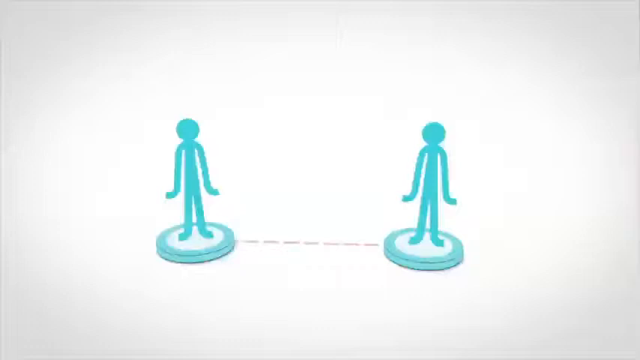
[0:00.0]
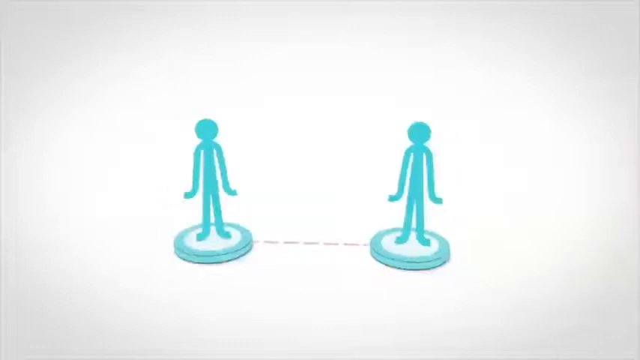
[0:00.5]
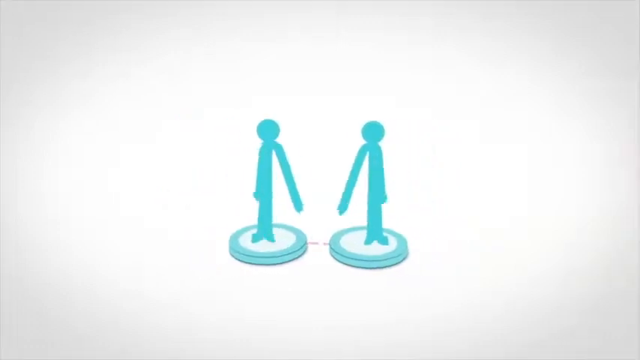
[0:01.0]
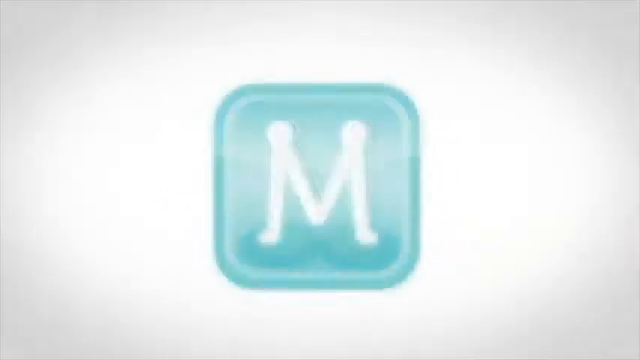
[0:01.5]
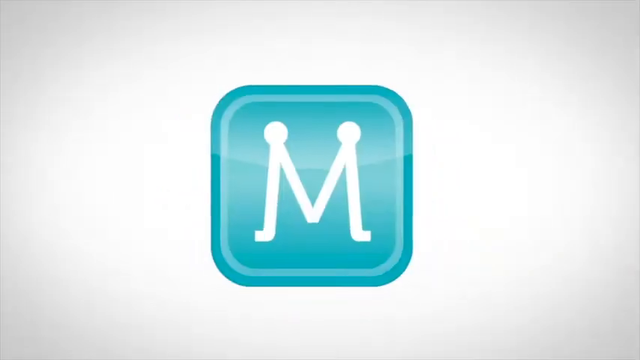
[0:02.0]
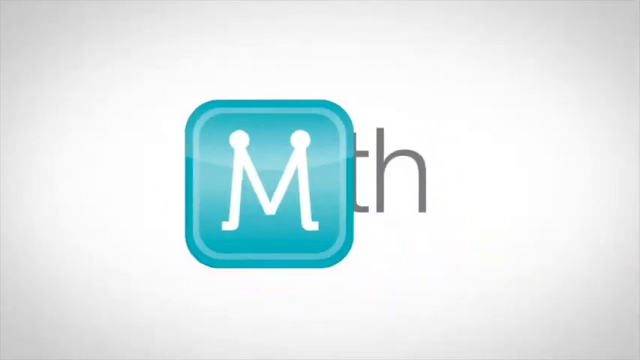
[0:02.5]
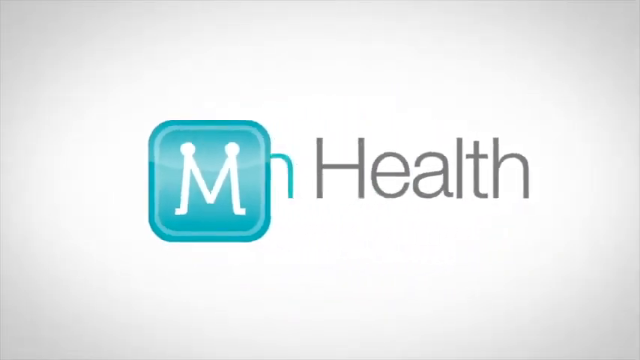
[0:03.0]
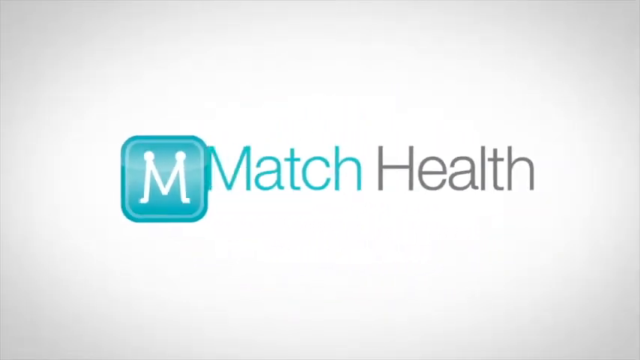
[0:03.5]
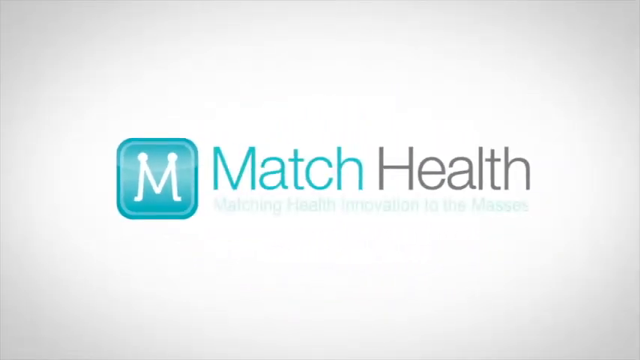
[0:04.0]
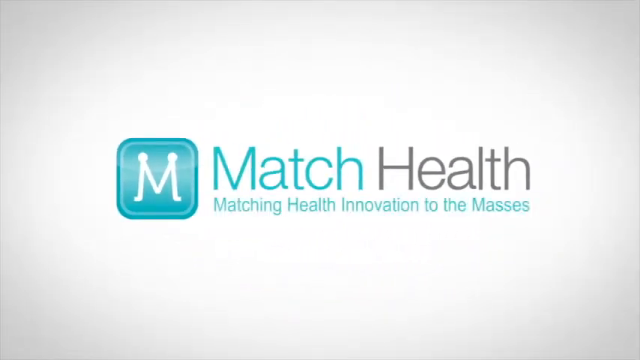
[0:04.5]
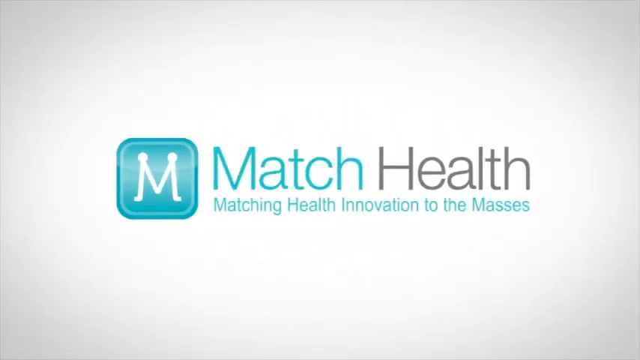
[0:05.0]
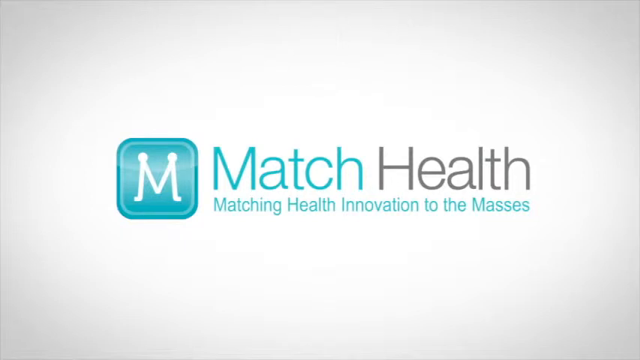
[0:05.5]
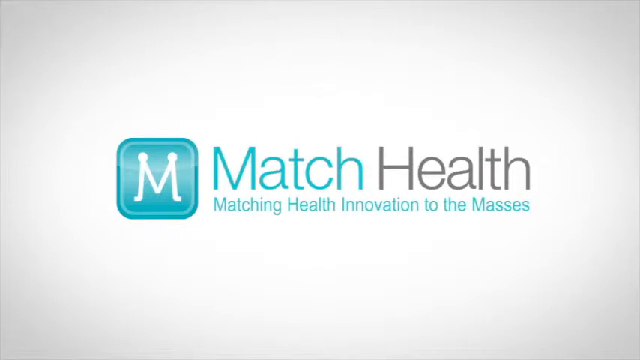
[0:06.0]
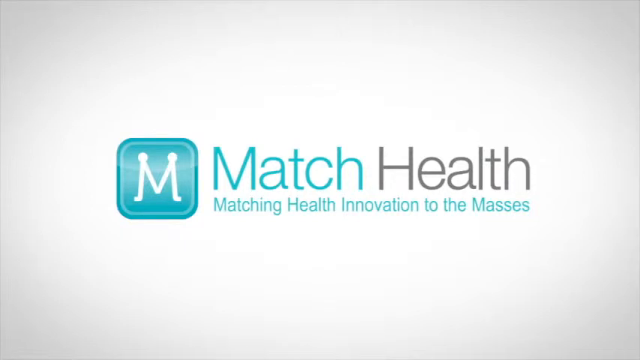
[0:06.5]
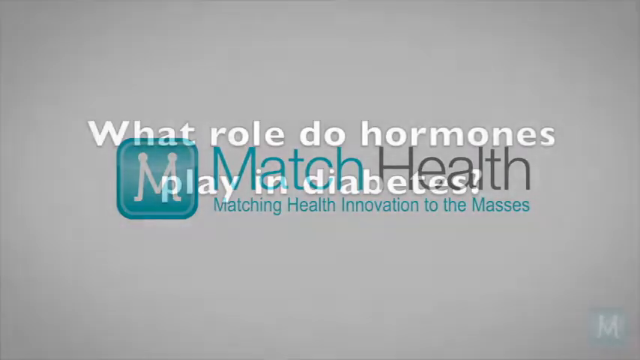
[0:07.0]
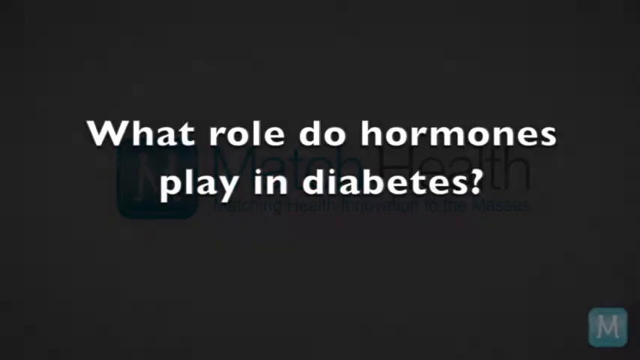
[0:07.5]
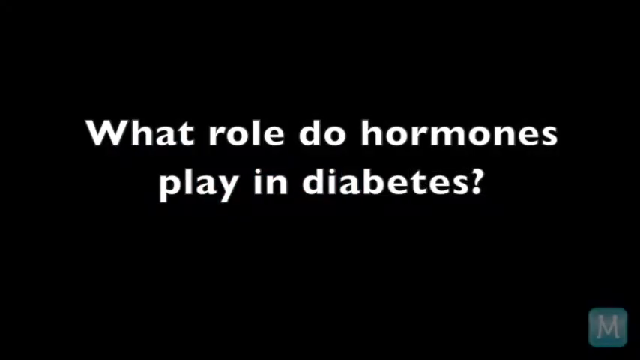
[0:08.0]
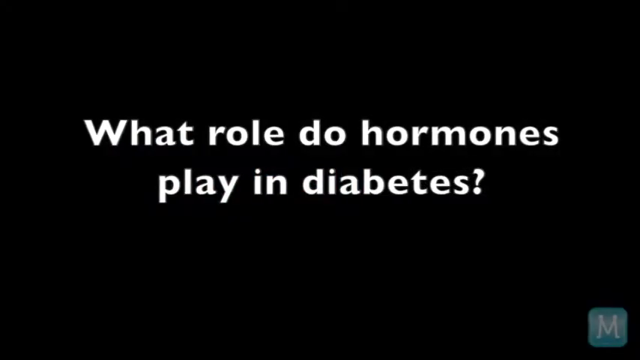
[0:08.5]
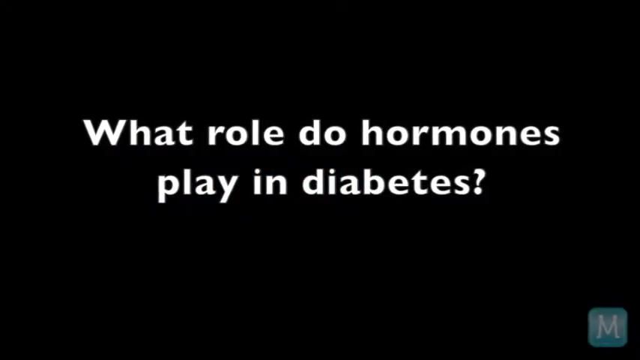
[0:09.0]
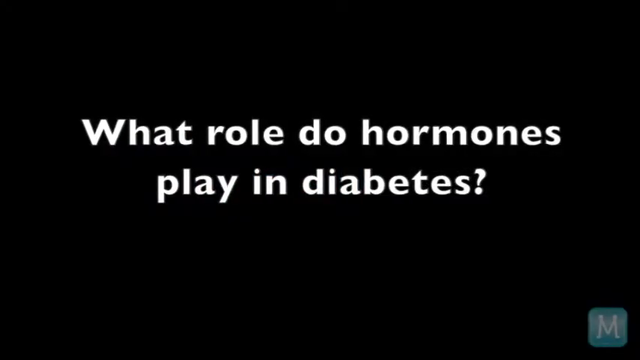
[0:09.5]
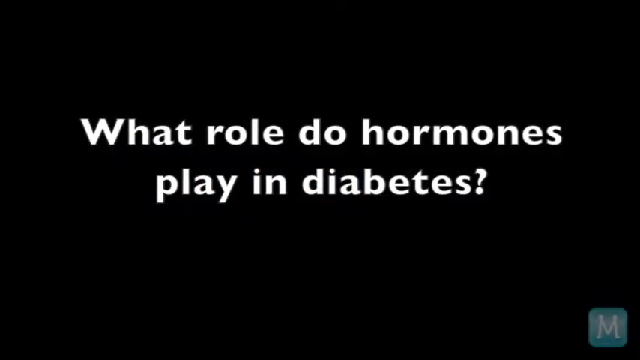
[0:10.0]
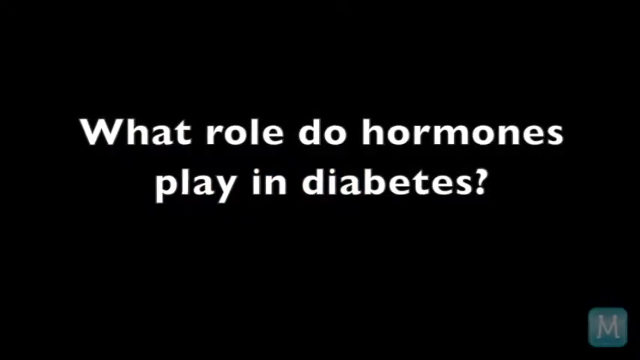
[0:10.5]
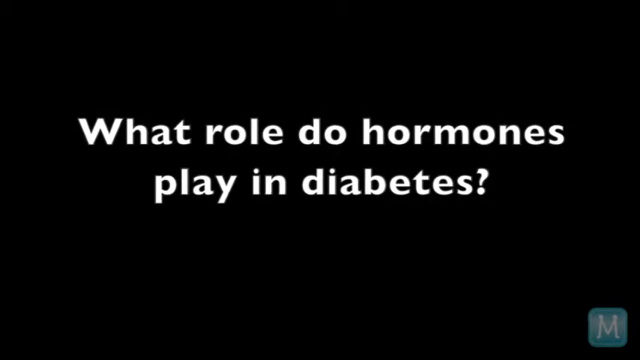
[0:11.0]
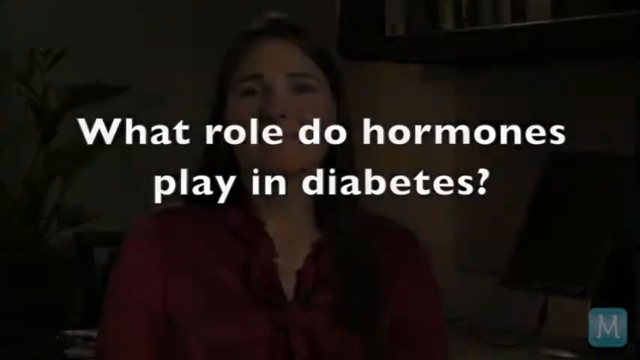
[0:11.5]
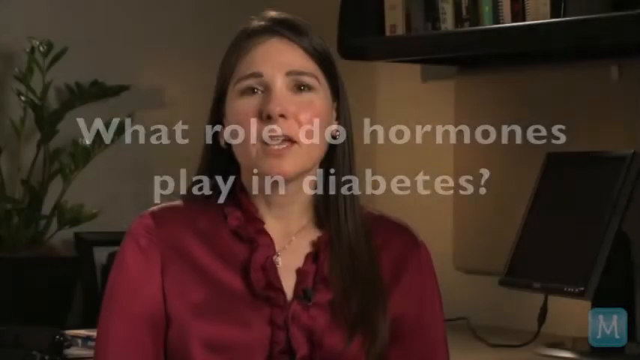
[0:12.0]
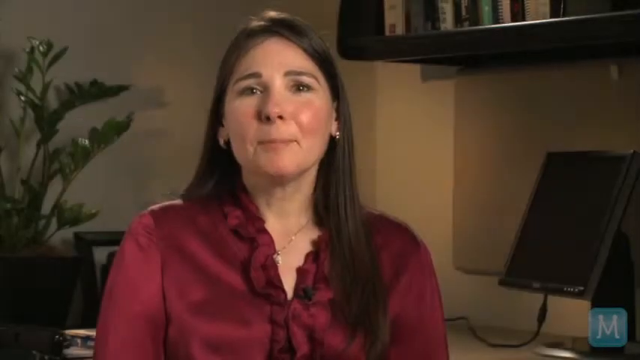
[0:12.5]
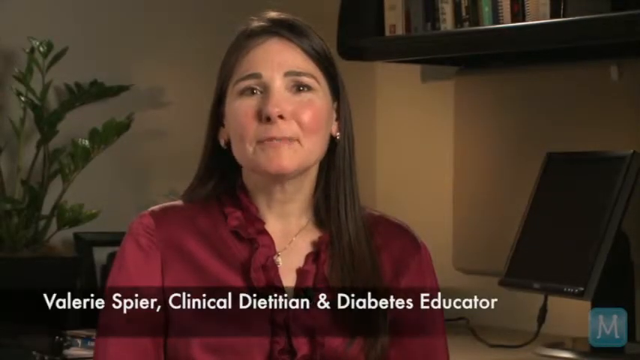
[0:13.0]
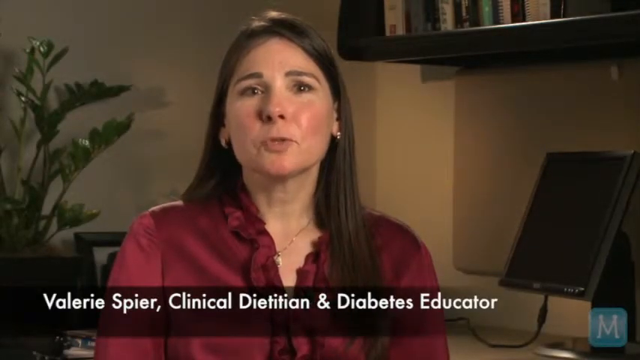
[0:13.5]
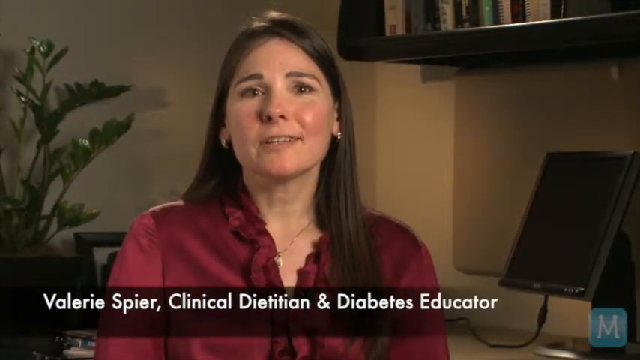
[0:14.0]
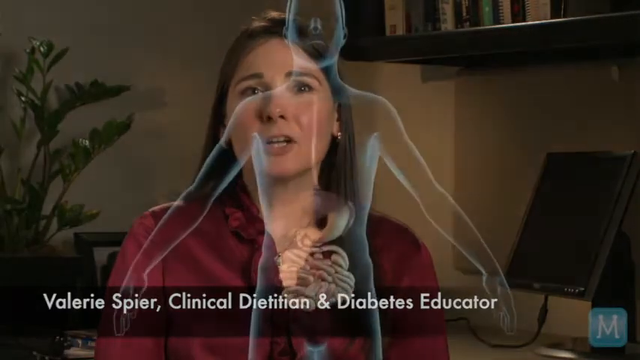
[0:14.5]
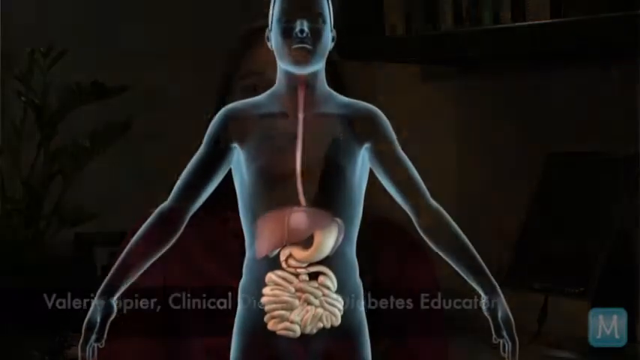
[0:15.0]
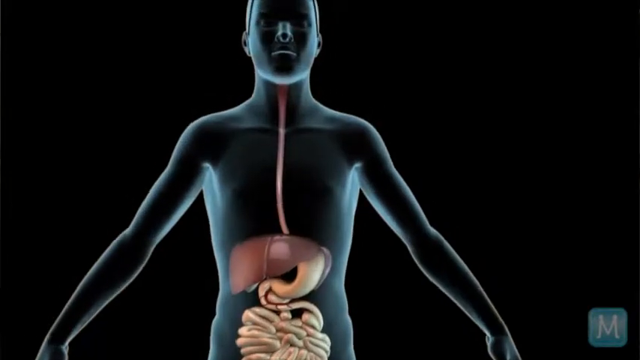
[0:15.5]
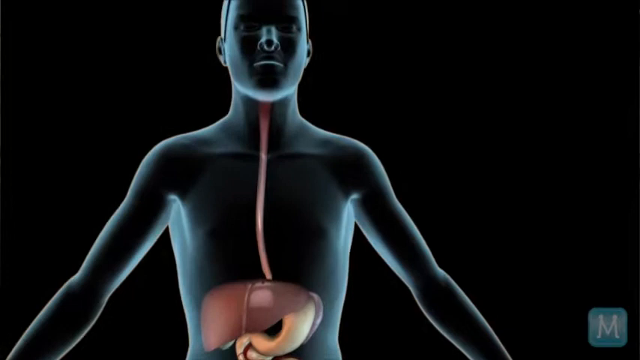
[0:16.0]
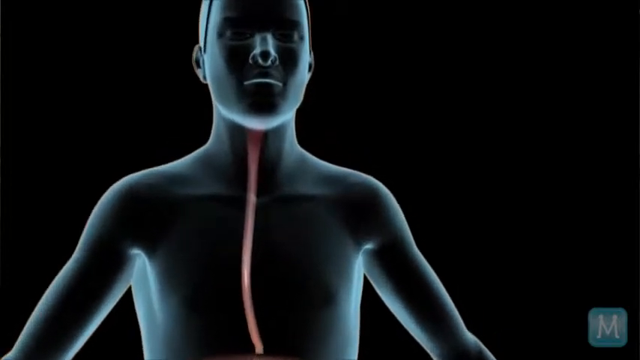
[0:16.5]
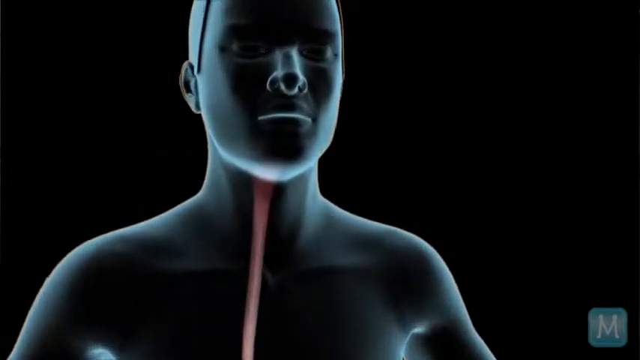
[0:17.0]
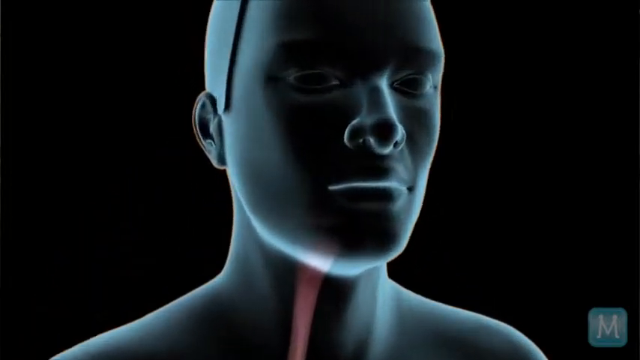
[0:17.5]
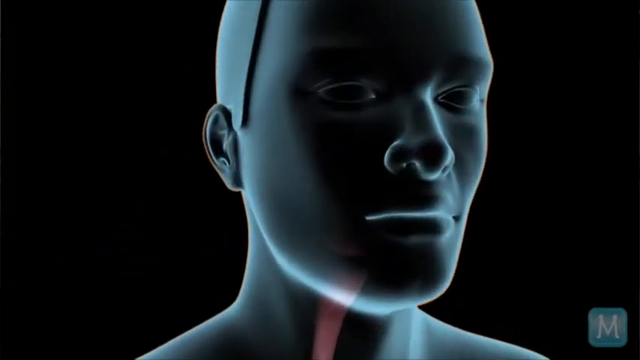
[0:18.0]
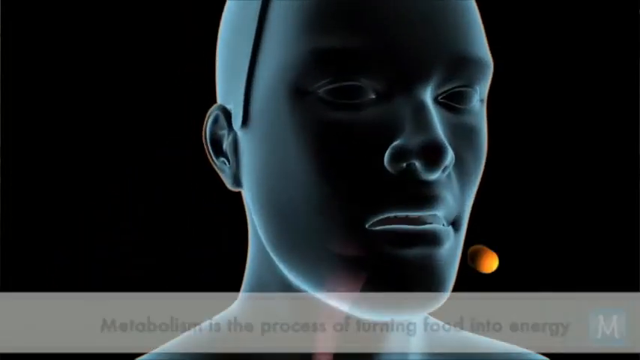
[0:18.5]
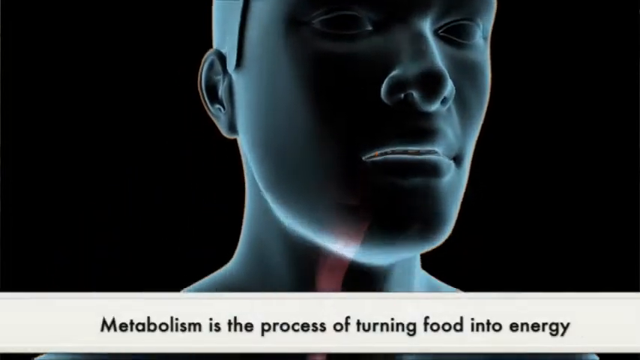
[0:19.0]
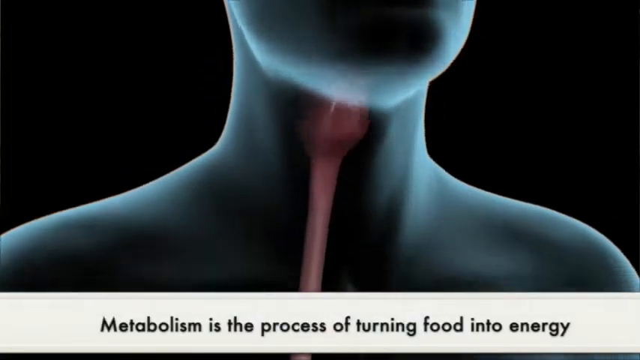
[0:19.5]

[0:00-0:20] Two turquoise stick-figure people appear against a white background. They are standing on circular platforms, with a dotted line connecting them. The two figures merge together and form the letter M, like an emblem or insignia for a company. Text then says "matching health innovation to the masses." The video cuts to a new slide with a black background and white text that says "what role do hormones play in diabetes?" A woman wearing a red shirt then appears, talking to the camera; it says her name is Valerie Spire, clinical dietician and diabetes educator. The video then switches to something like an x-ray of a person, outlining the esophagus and the intestinal tract. It starts zooming in to the face, as if the person is eating something and it is going down.